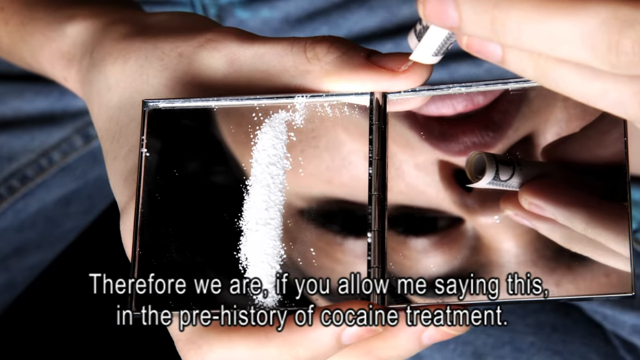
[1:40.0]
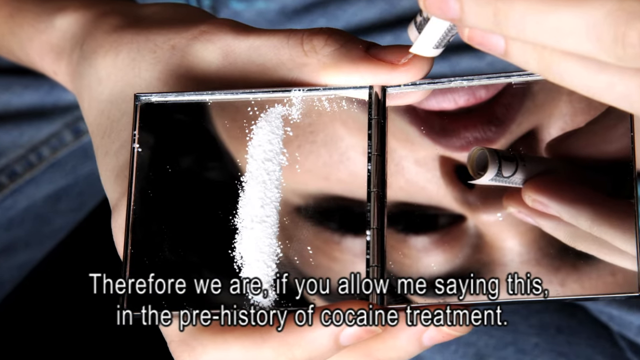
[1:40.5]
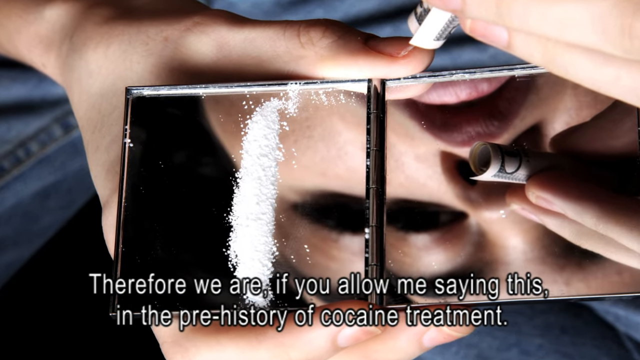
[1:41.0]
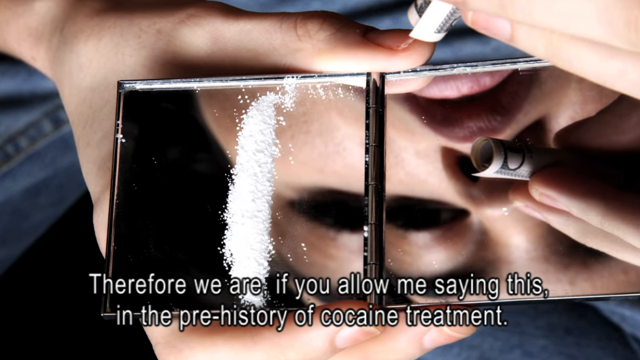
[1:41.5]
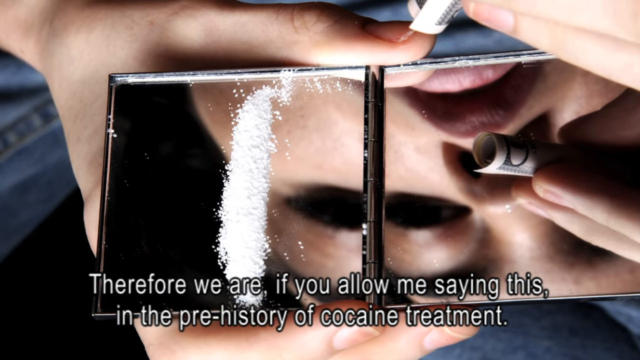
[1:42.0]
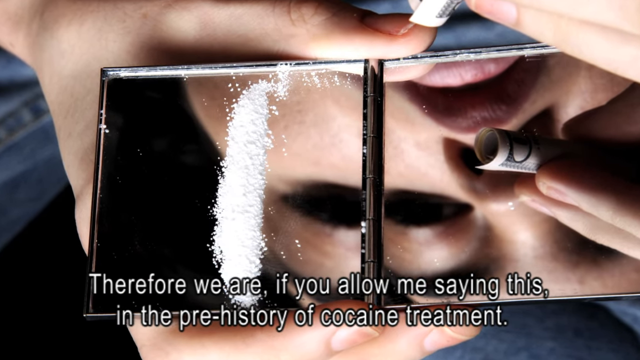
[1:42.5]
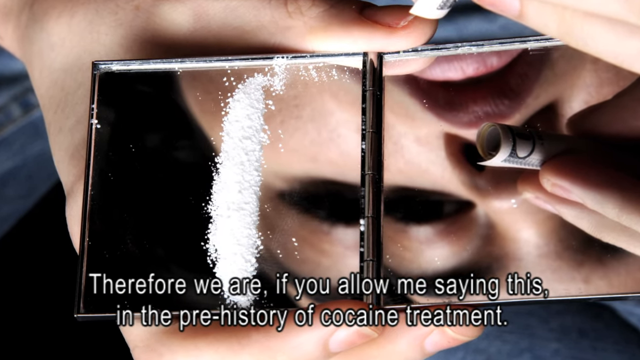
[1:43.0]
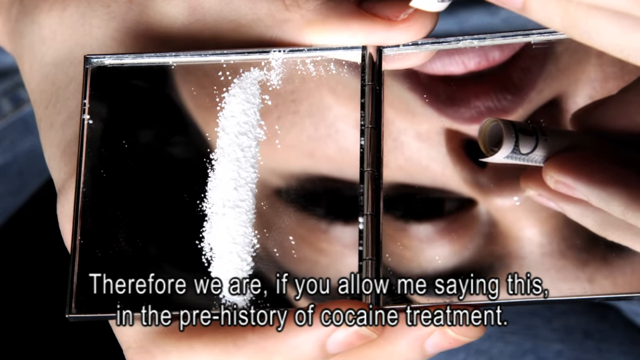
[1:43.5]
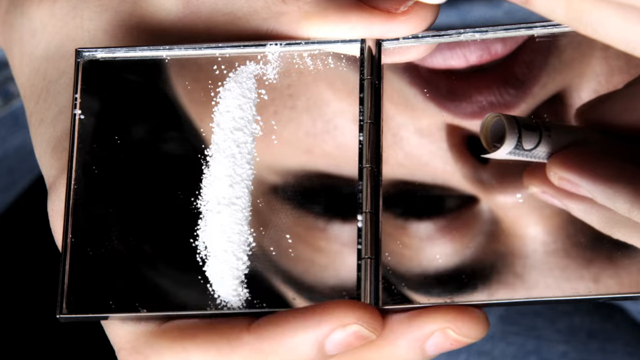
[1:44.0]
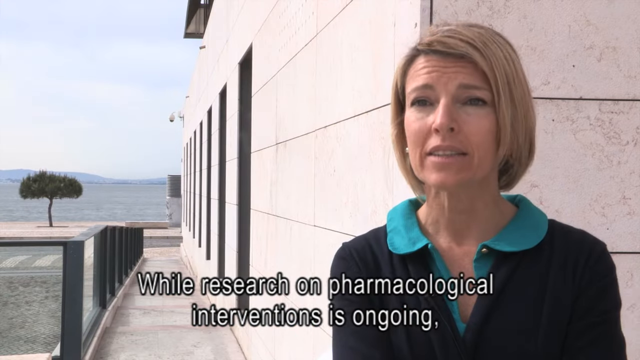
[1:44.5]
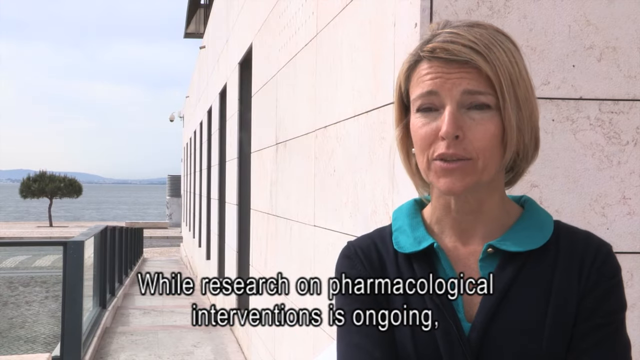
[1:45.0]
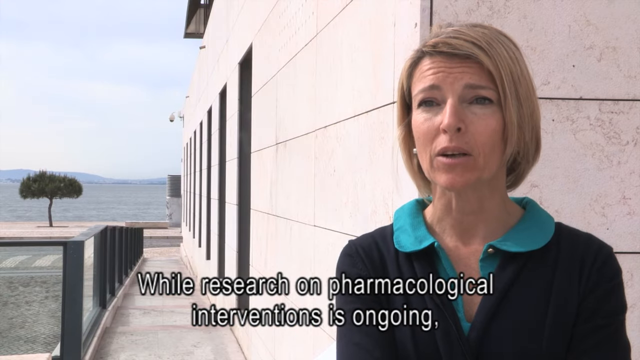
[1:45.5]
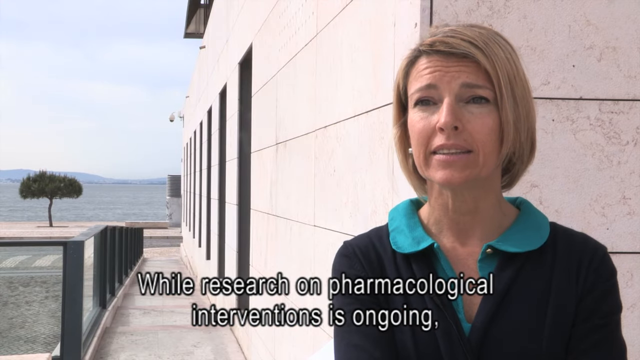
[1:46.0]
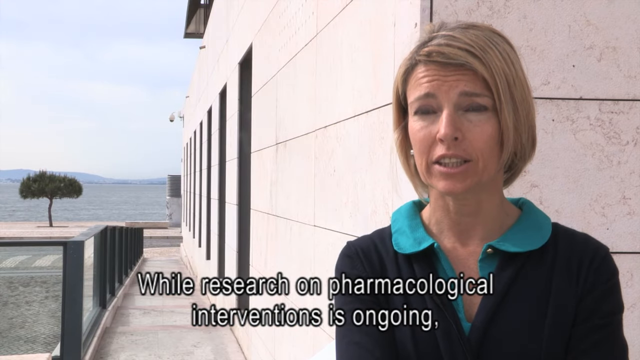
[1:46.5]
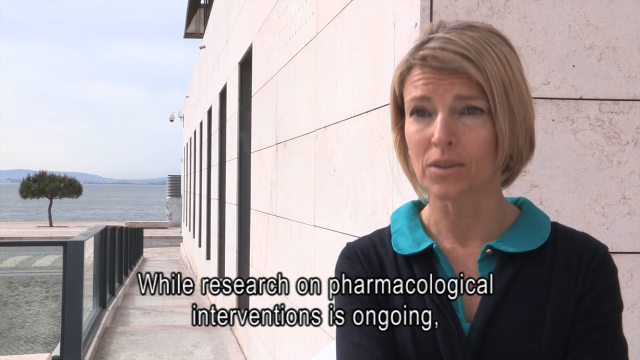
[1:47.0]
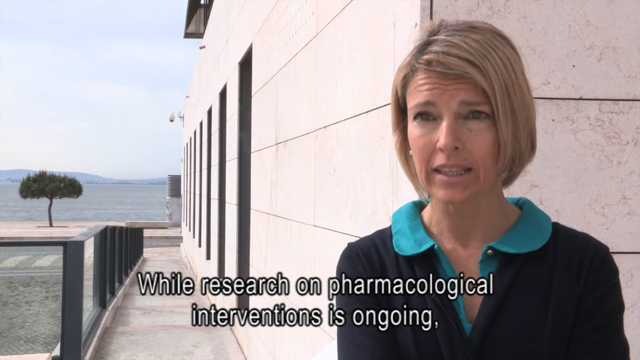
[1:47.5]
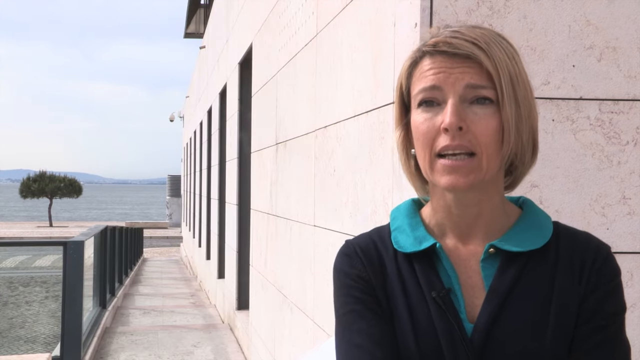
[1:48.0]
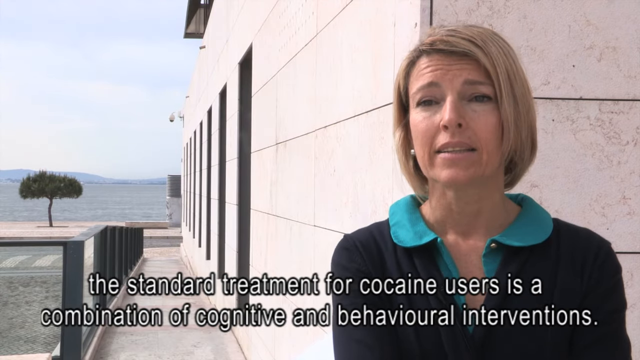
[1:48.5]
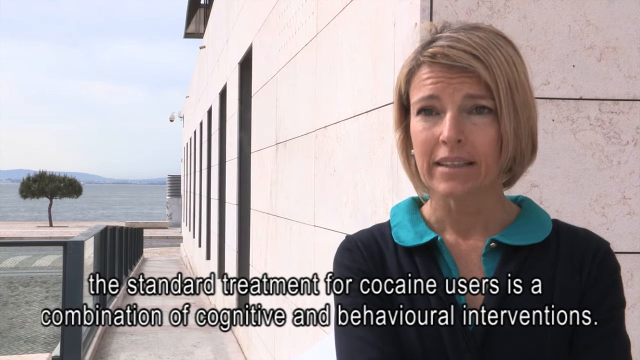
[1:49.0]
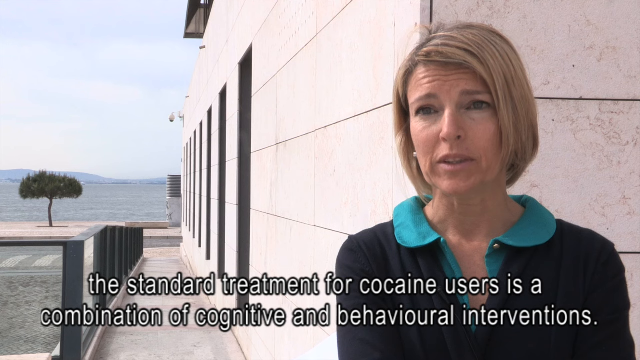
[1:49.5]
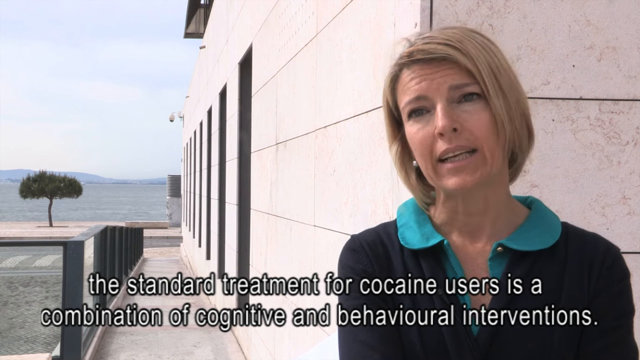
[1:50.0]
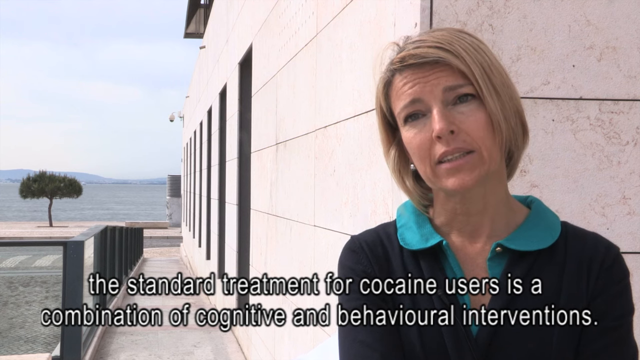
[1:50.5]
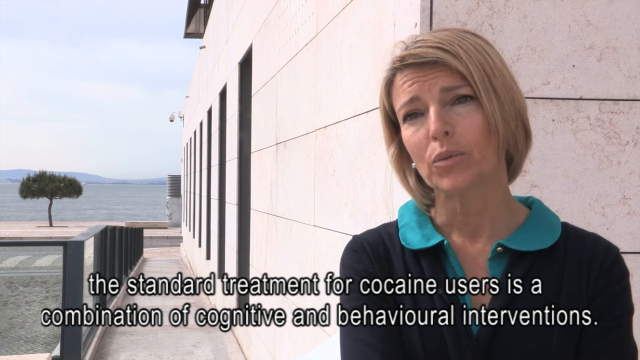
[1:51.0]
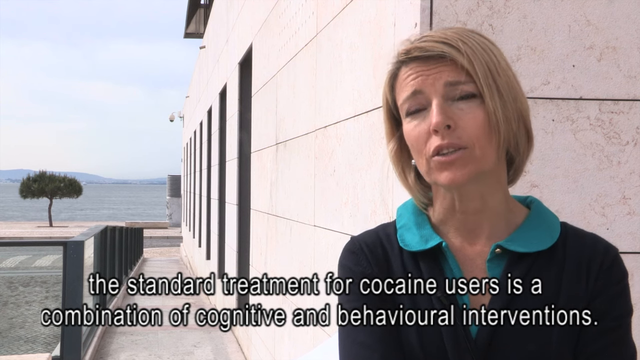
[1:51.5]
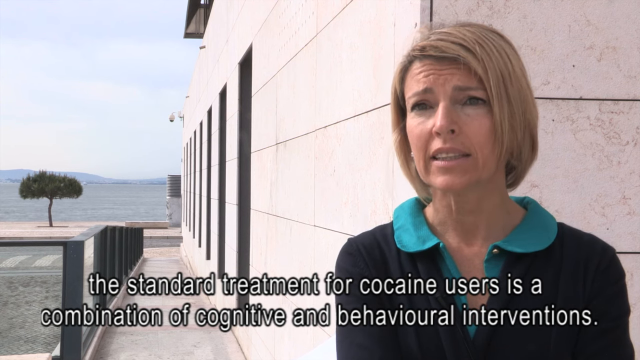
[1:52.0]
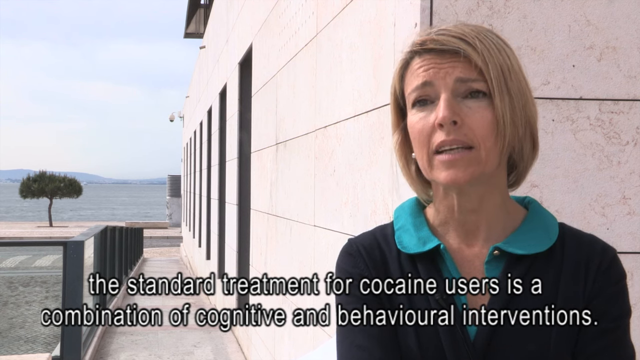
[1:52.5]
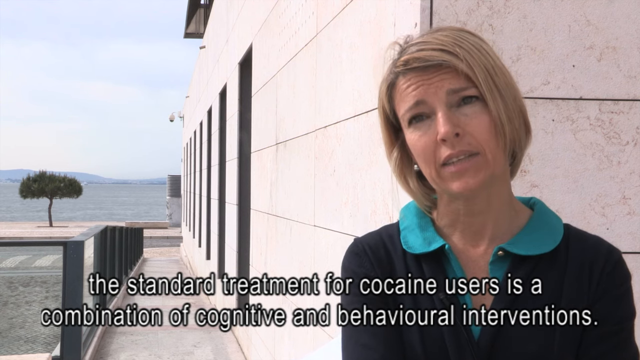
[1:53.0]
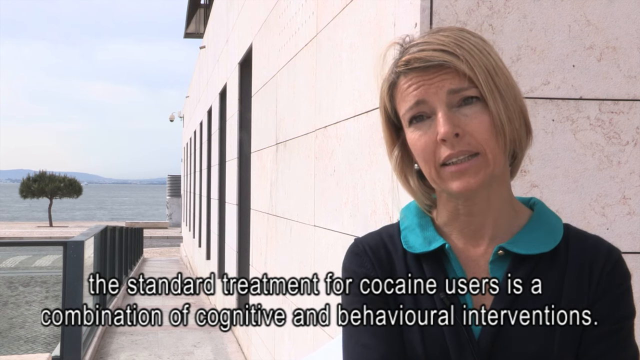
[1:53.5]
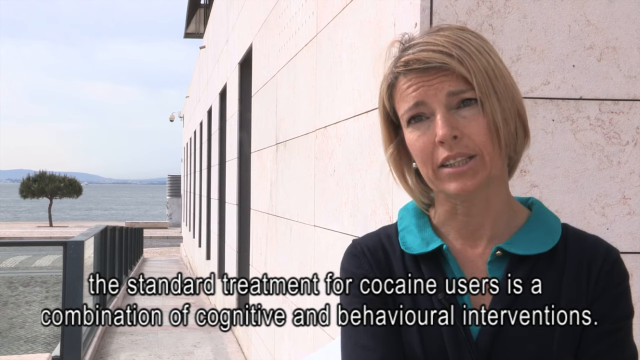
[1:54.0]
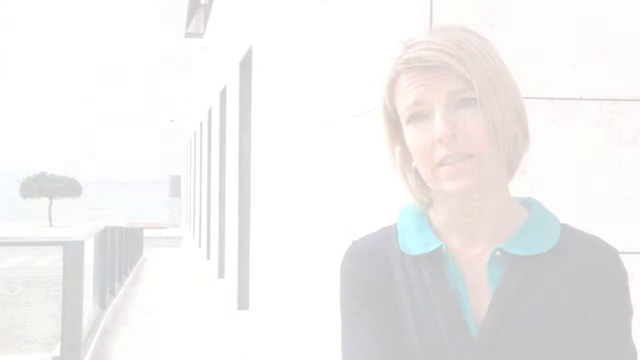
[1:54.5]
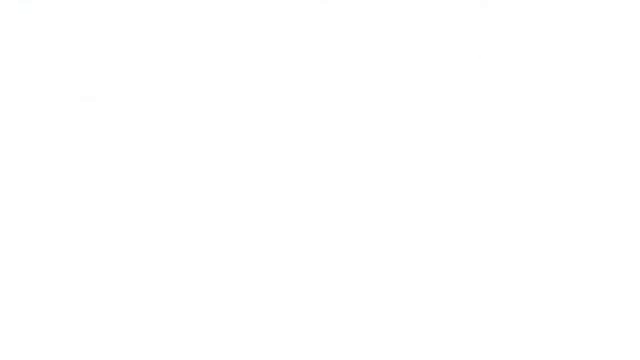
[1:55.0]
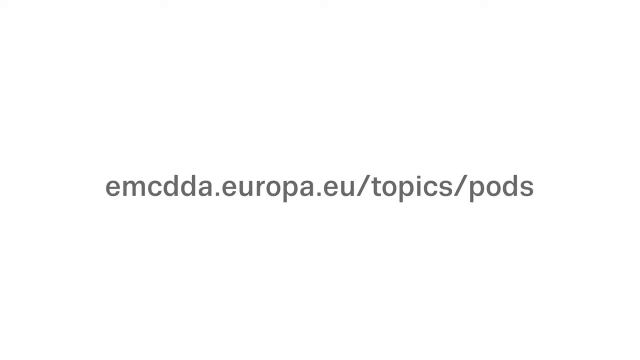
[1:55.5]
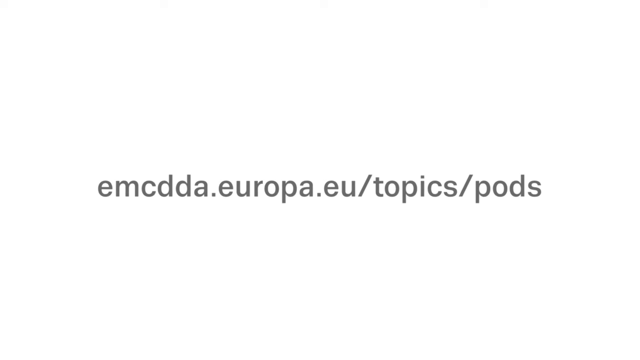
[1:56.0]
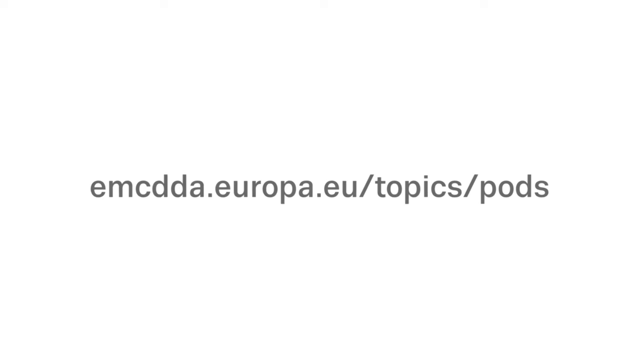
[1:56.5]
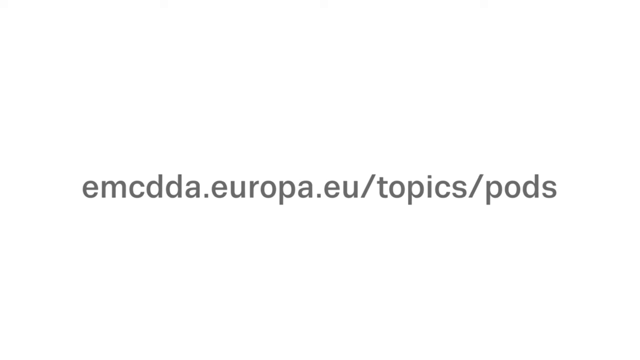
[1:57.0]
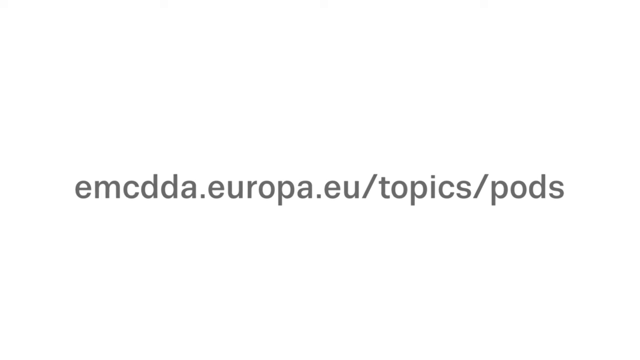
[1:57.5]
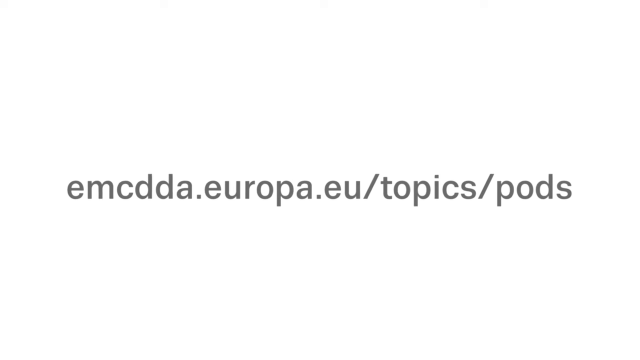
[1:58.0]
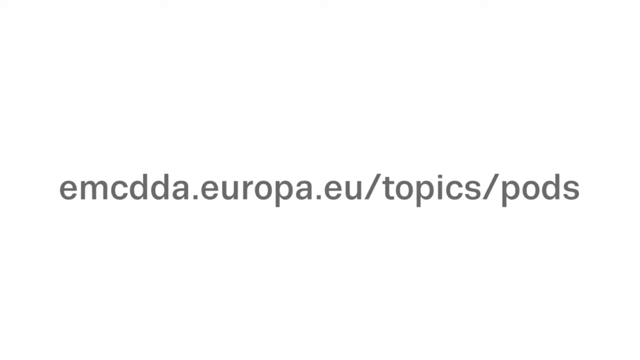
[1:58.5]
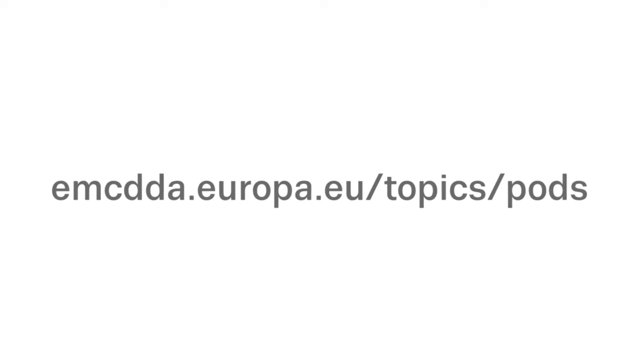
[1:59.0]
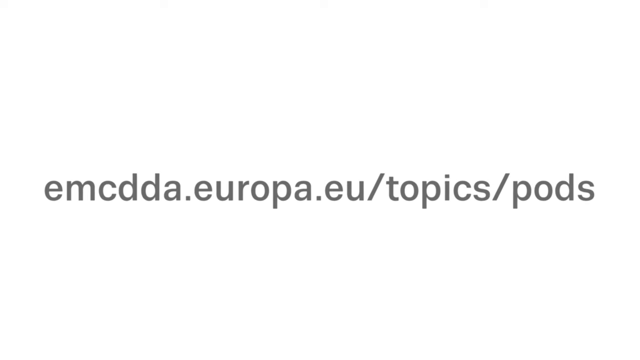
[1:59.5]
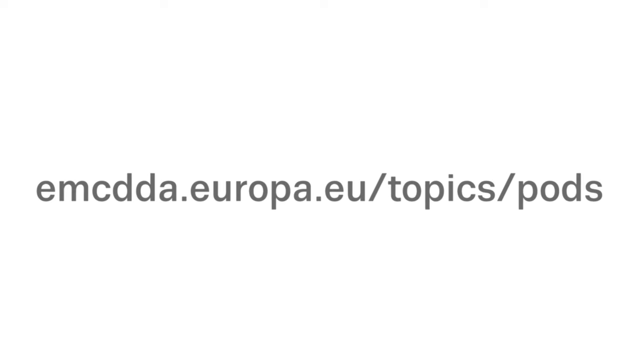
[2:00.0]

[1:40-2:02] A double-sided mirror holds a line of cocaine, kind of lined up but a little sloppy. In the reflection is a person who appears to be a white woman with kind of puffy lips and very heavy-lidded eyes; half an eye is visible in one part of the mirror and her lips, with no lipstick, on the other side. The person, wearing jeans, sits holding the mirror, and her fingertips, with very short fingernails, hold a tightly rolled piece of paper currency. She looks like she is getting ready to sniff the cocaine.